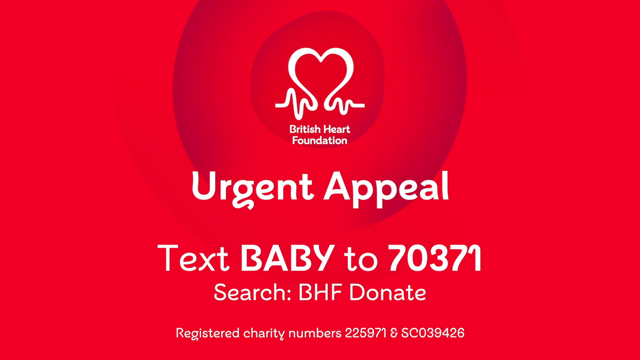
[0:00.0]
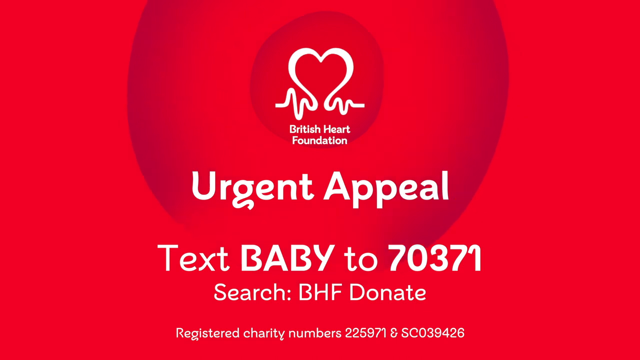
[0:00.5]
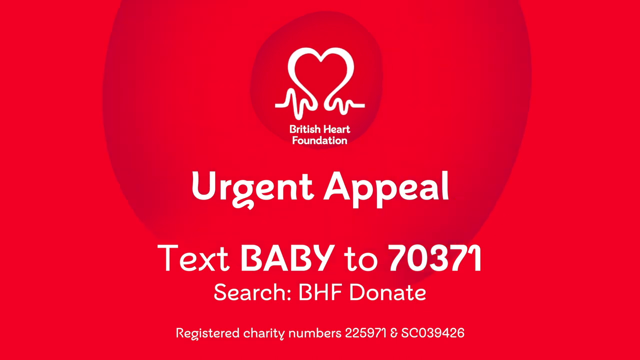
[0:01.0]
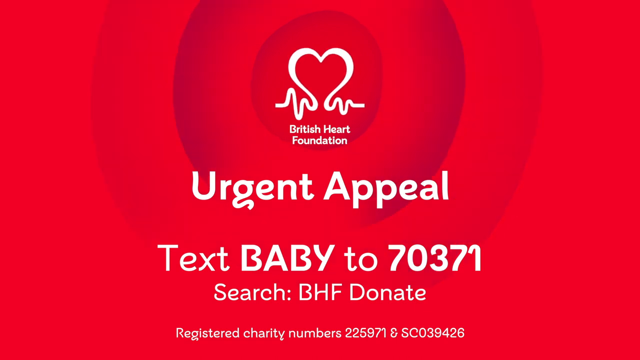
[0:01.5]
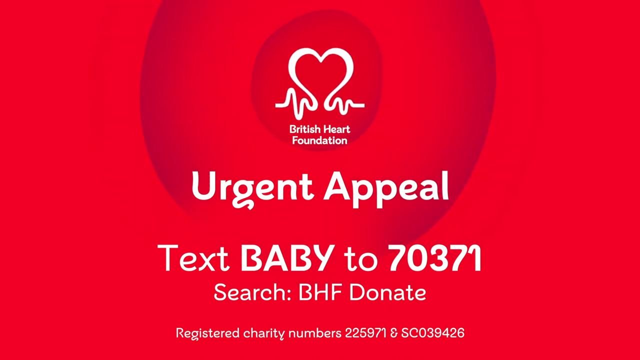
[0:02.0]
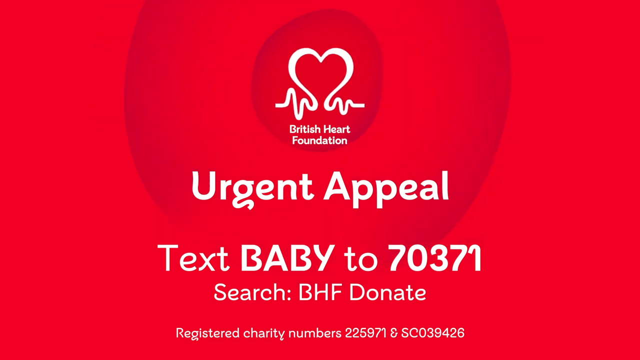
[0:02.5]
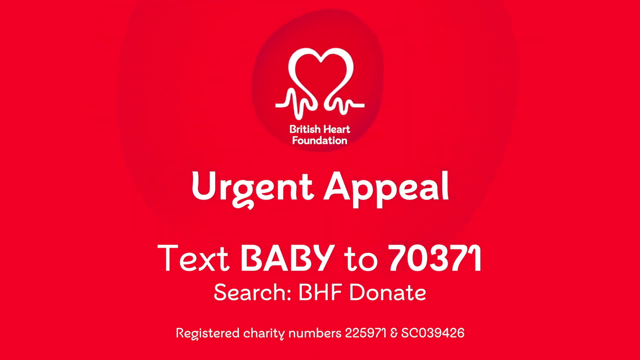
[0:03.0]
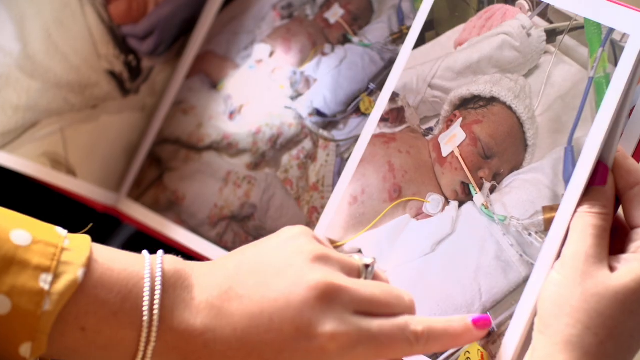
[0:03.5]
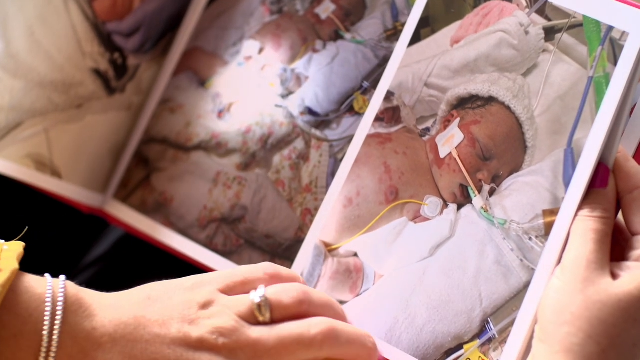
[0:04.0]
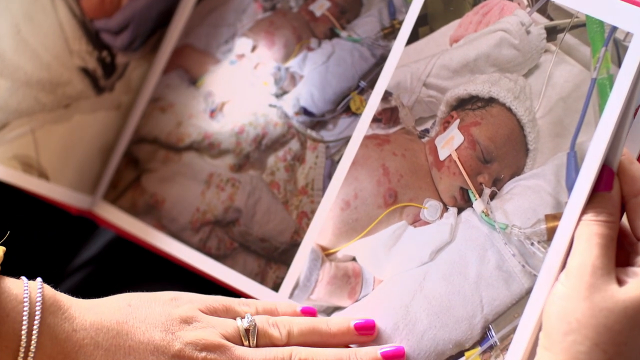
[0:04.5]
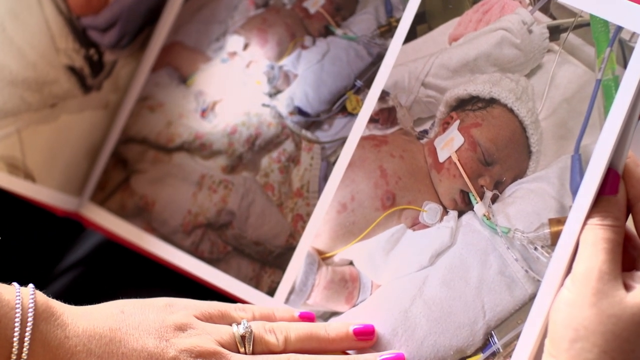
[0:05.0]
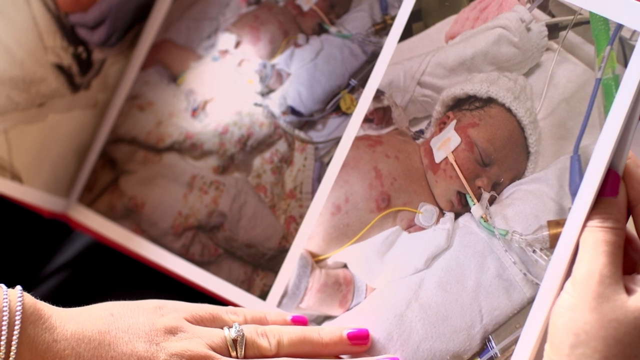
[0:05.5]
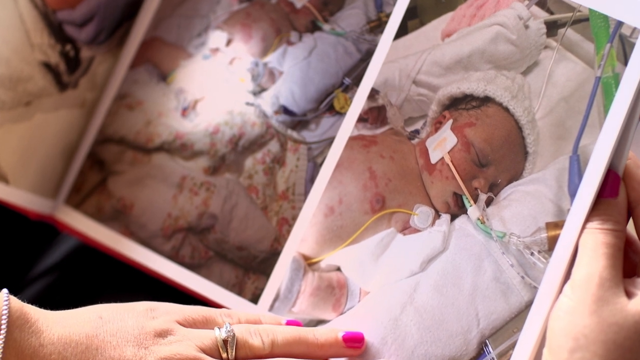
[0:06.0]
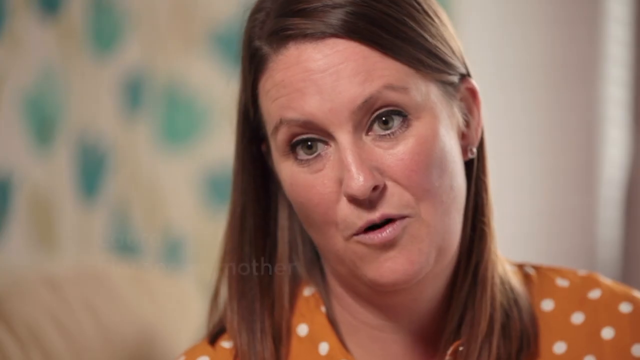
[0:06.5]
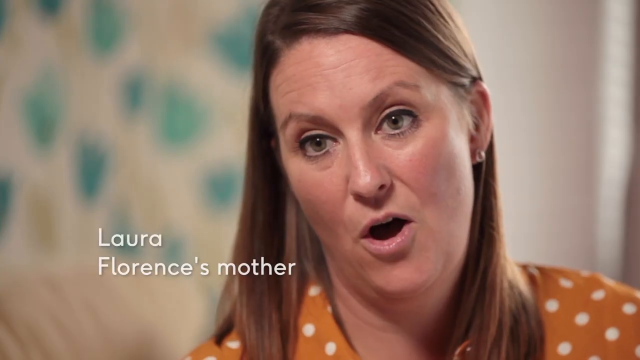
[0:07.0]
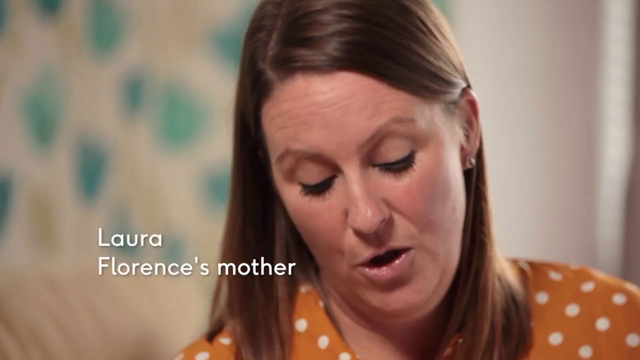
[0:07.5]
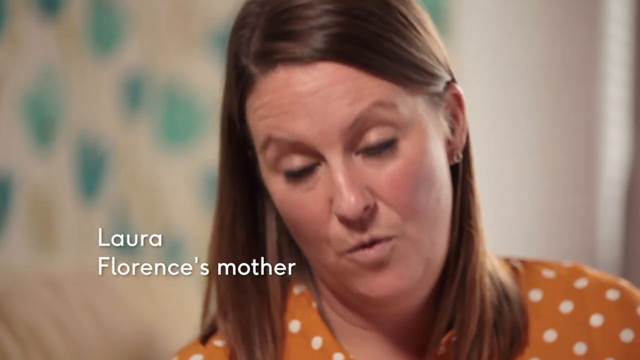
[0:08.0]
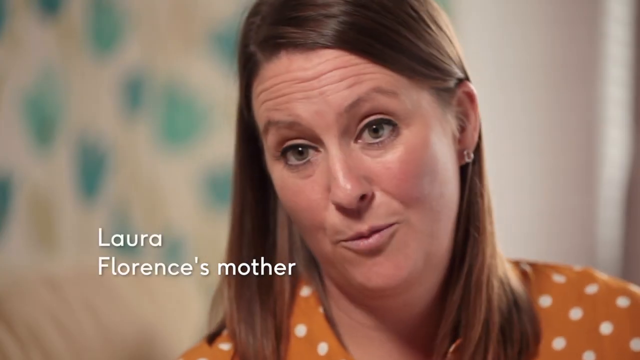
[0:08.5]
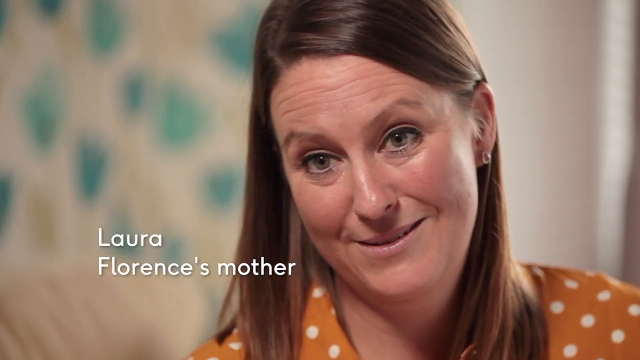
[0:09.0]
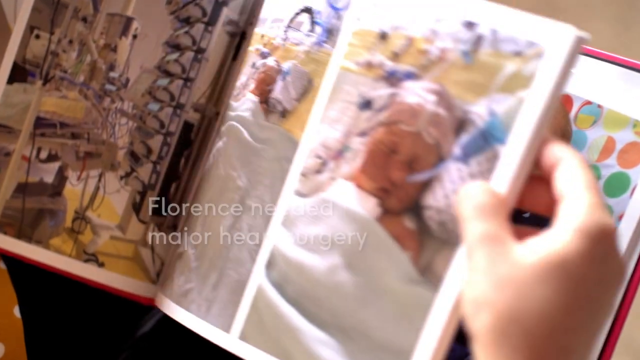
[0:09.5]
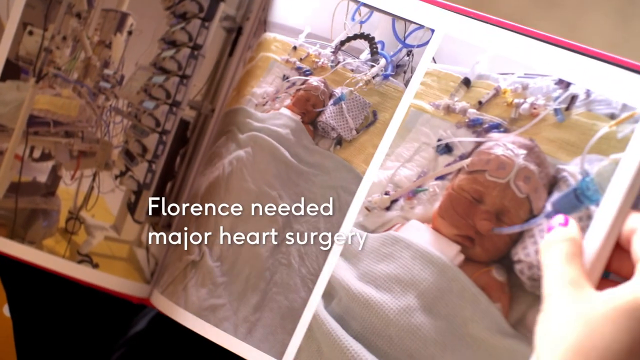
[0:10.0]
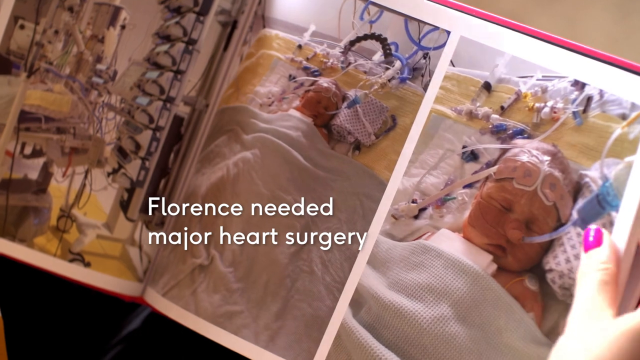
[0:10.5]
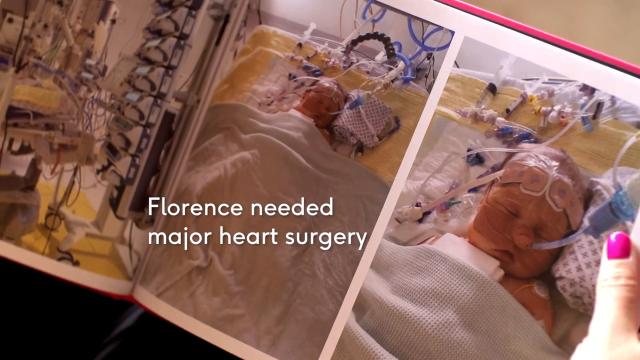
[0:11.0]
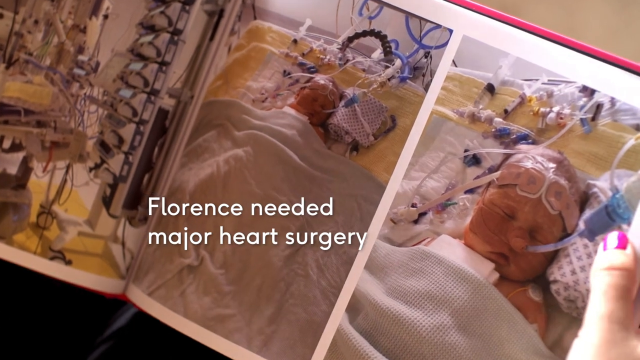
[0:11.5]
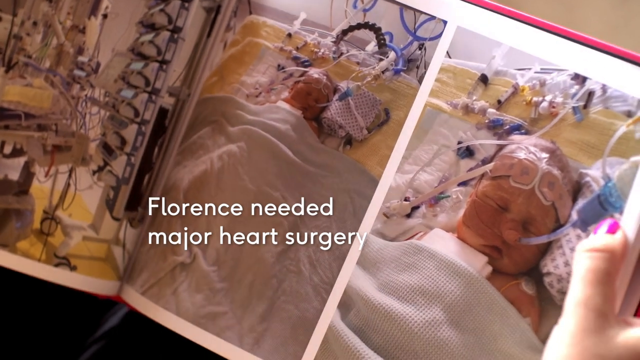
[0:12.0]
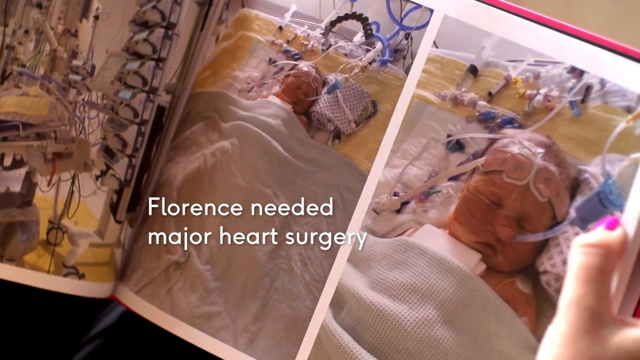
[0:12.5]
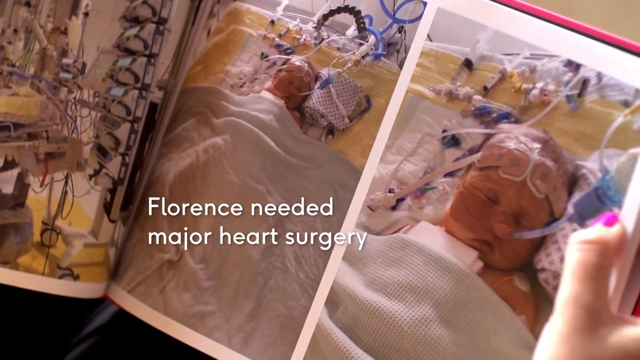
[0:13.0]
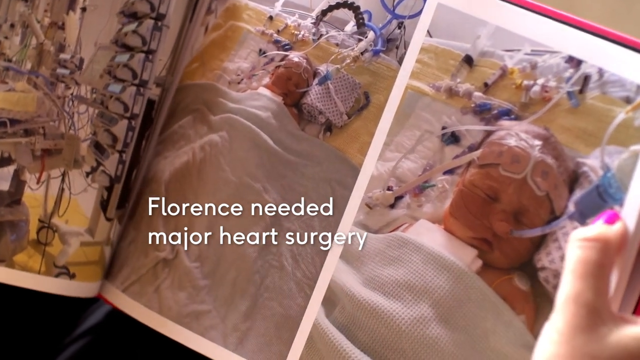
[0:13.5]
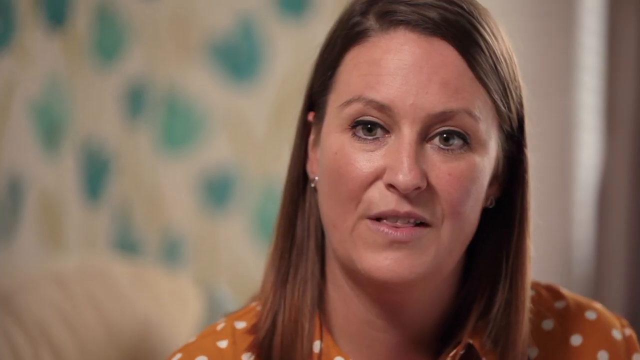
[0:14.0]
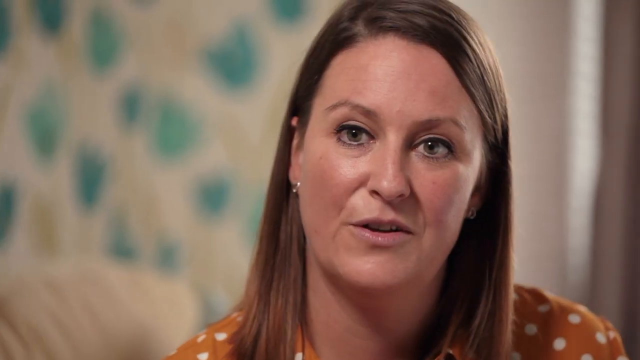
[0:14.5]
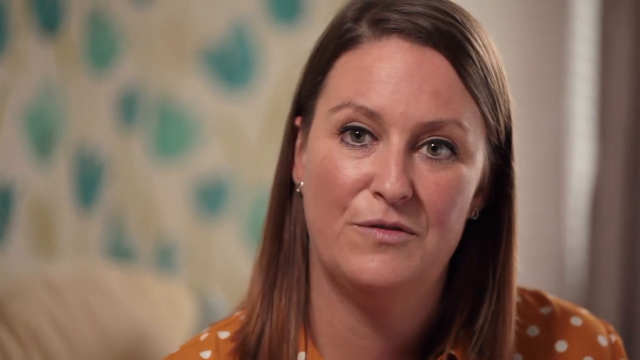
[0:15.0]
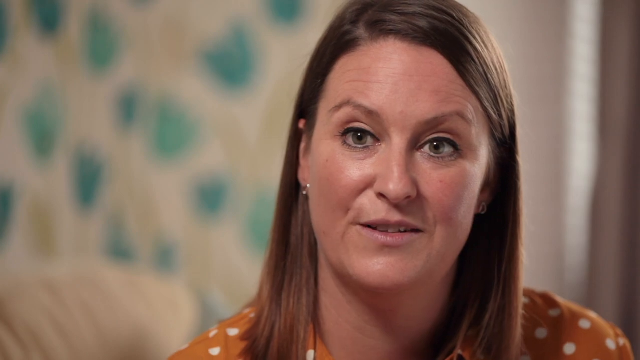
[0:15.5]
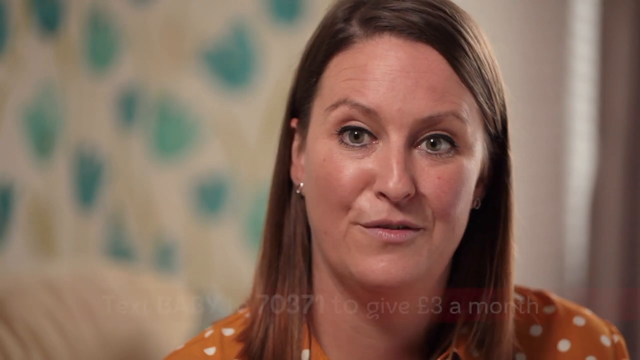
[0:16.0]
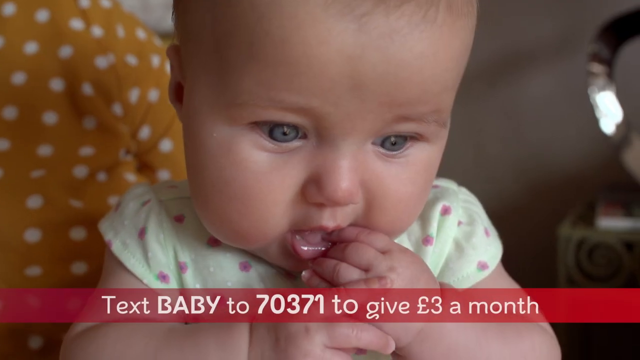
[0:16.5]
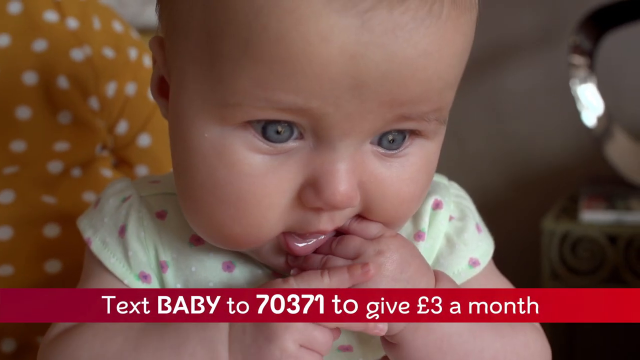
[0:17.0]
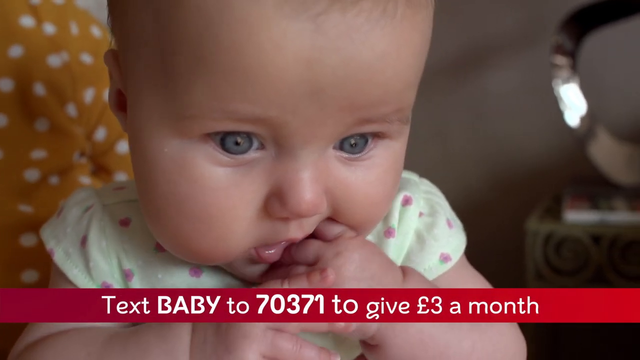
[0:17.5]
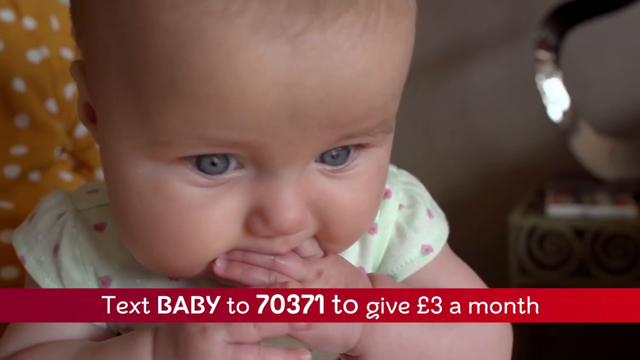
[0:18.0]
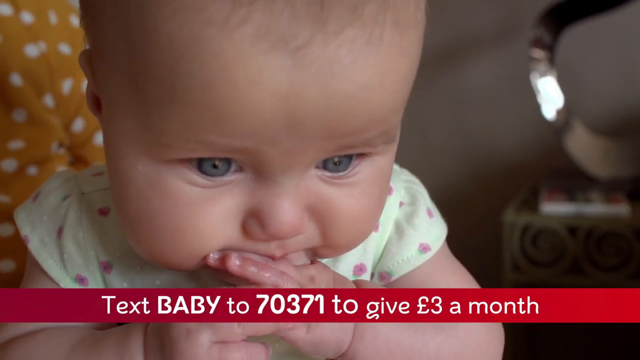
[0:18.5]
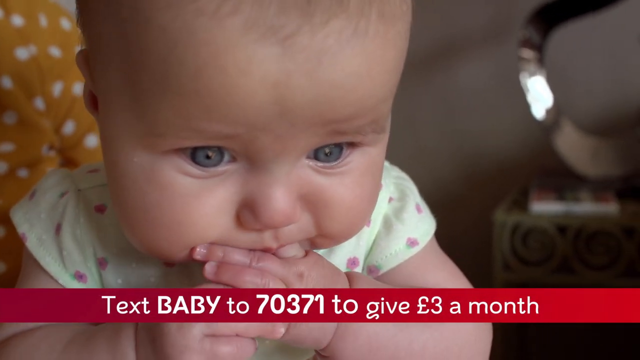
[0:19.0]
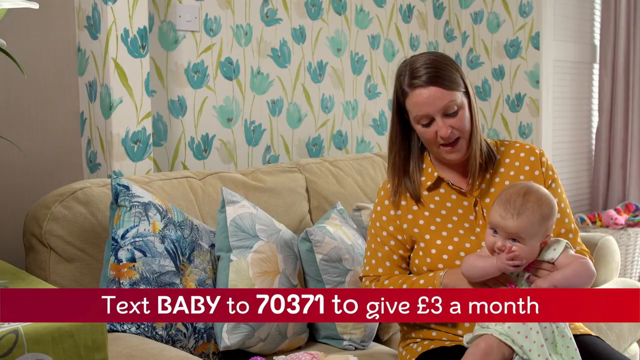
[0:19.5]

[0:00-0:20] The video is from the British Heart Foundation. It opens on a red screen with the British Heart Foundation logo, the white outline of a heart with lines at its base that look like the readout on a heart monitor. In the center of the screen the text reads "Urgent Appeal. Text BABY to 70371. Search BHF Donate." Below this, at the bottom of the screen, it reads "Registered Charity Numbers 225971 and SC039426." Photographs and video follow of a baby in need of a heart operation, including photos of her in ICU. In video of her mother speaking to someone behind the camera, the mother, who has light brown hair, is identified on screen as Laura, Florence's mother. Further on-screen text reads "Florence needed major heart surgery." Video then shows the baby on her mother's lap as a red text bar appears across the bottom of the screen reading "Text baby to 70371 to give three pounds a month."